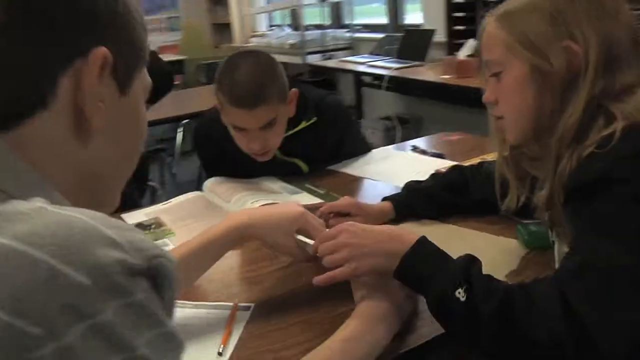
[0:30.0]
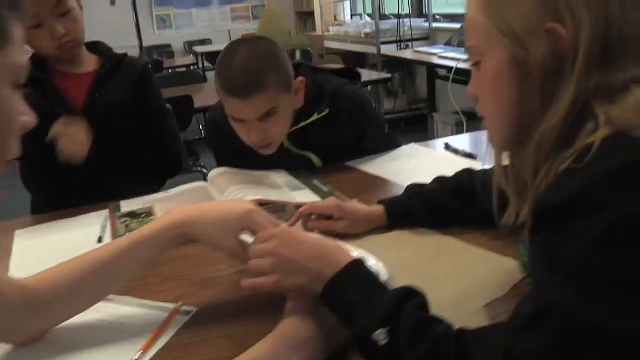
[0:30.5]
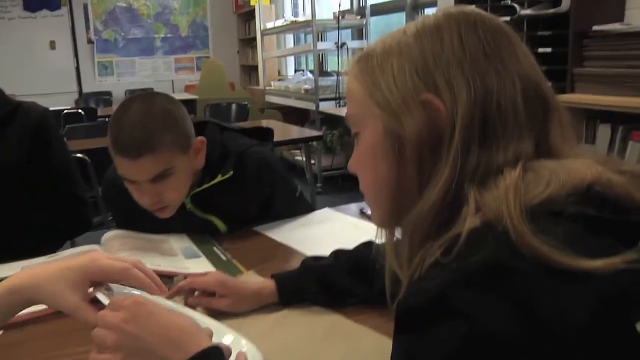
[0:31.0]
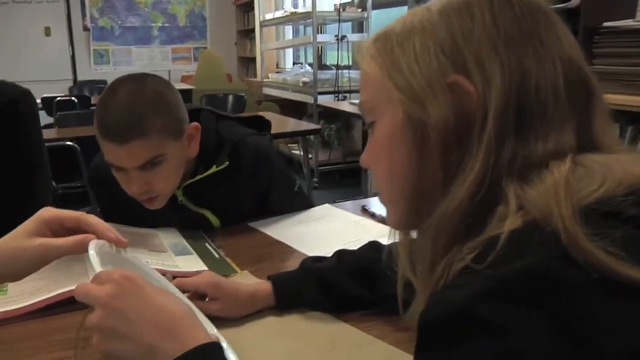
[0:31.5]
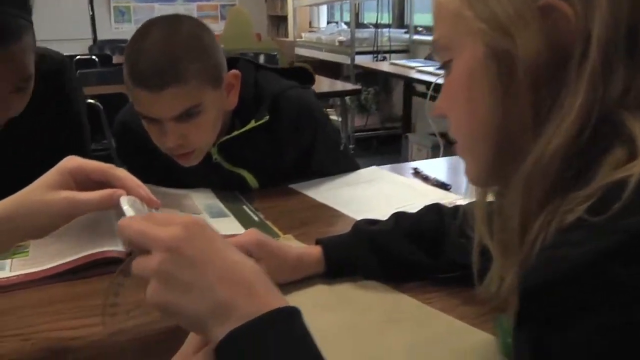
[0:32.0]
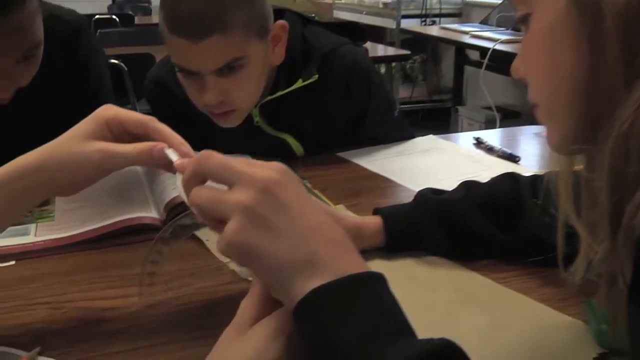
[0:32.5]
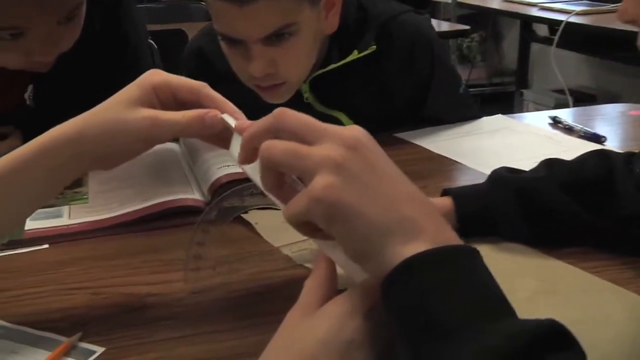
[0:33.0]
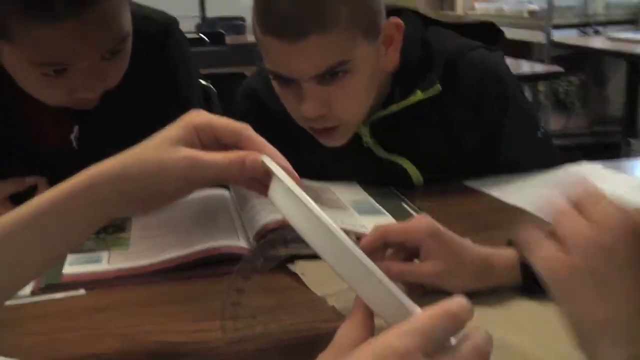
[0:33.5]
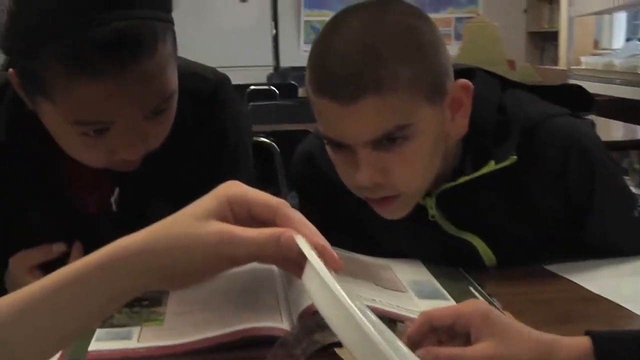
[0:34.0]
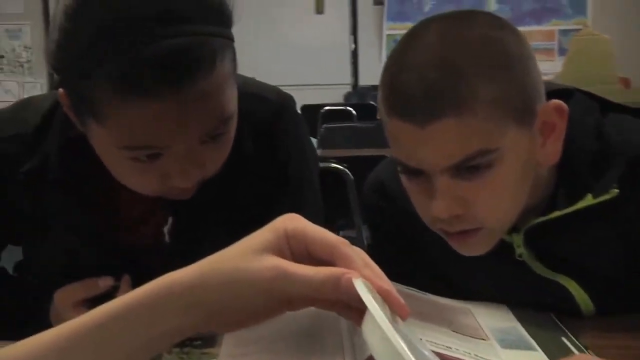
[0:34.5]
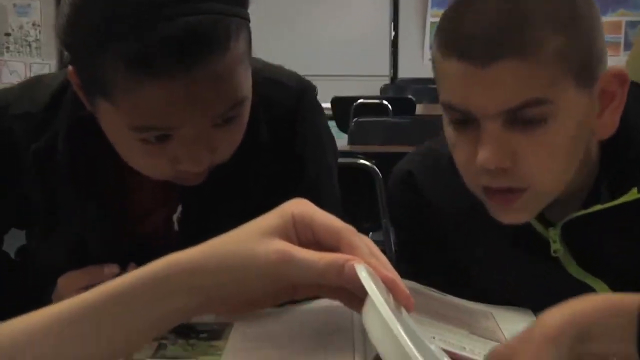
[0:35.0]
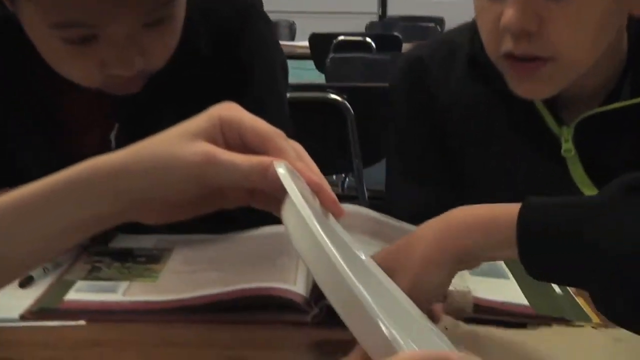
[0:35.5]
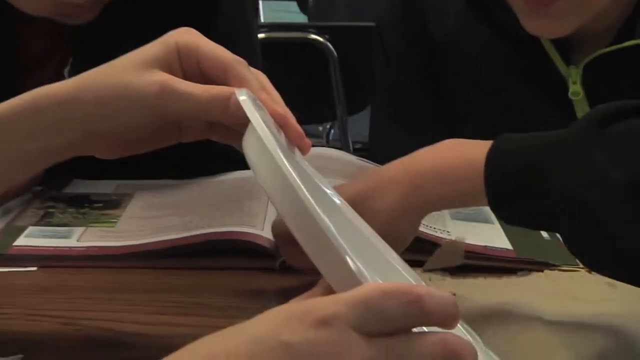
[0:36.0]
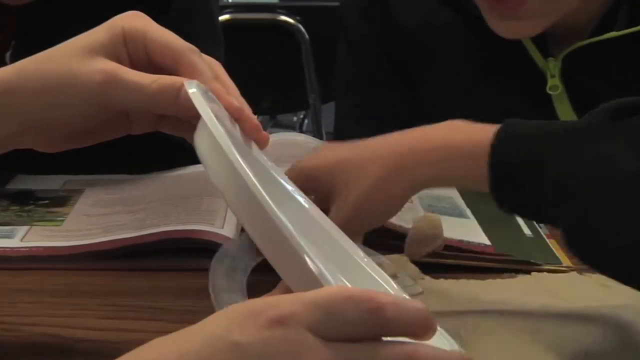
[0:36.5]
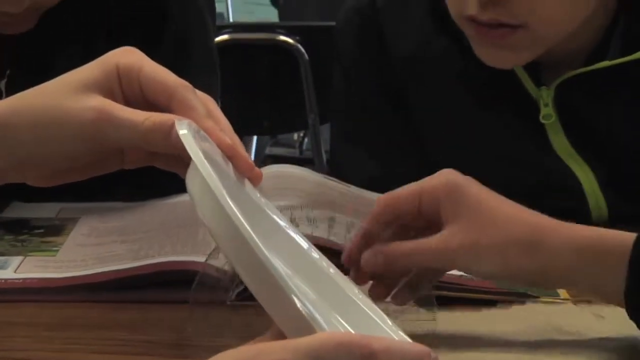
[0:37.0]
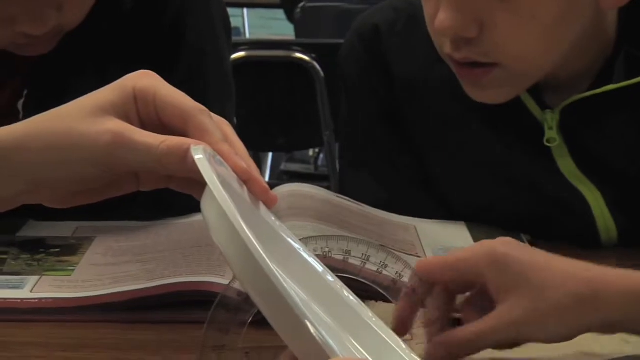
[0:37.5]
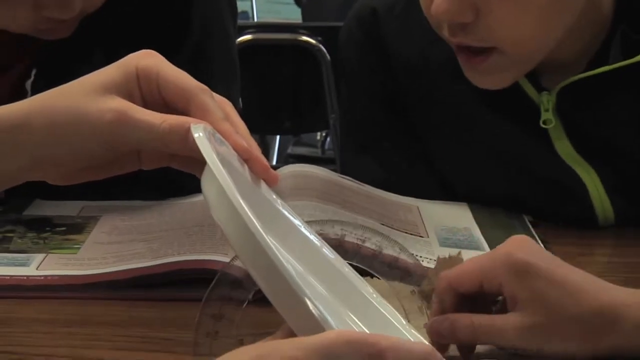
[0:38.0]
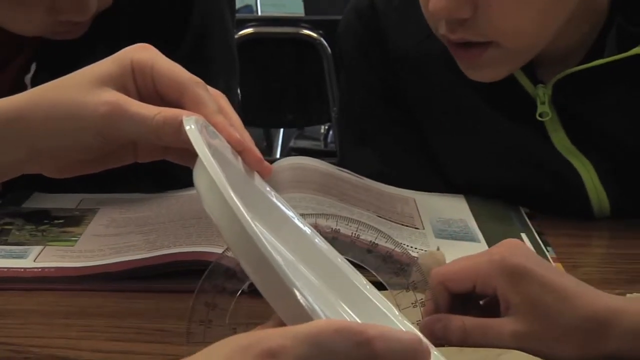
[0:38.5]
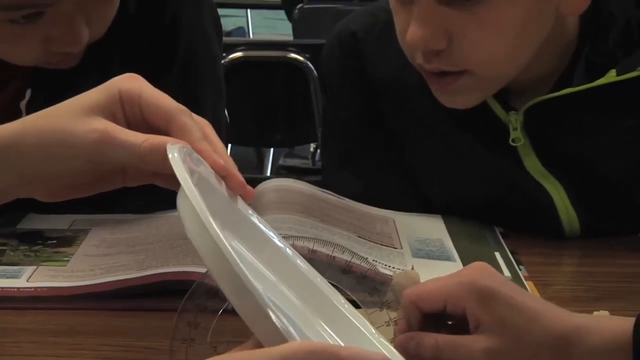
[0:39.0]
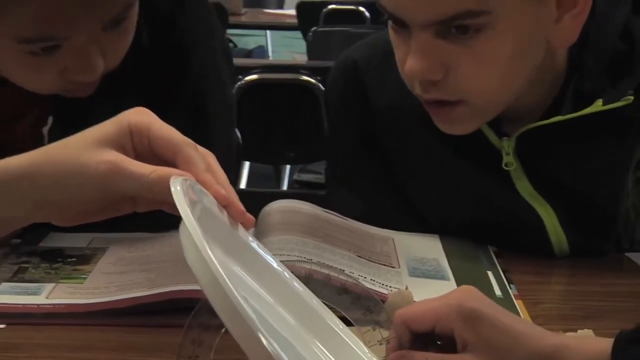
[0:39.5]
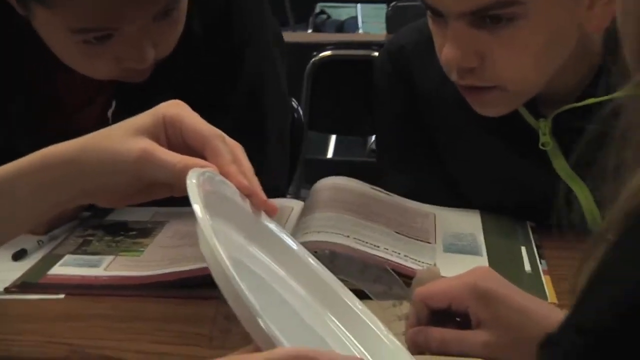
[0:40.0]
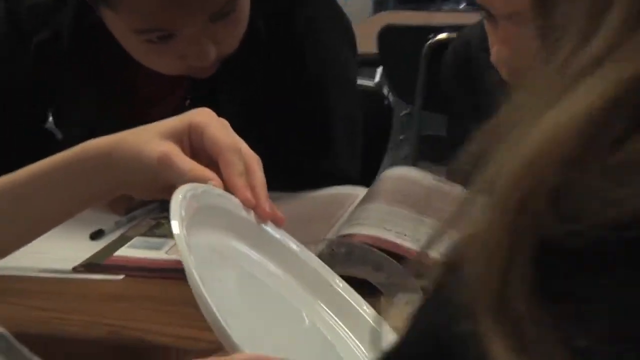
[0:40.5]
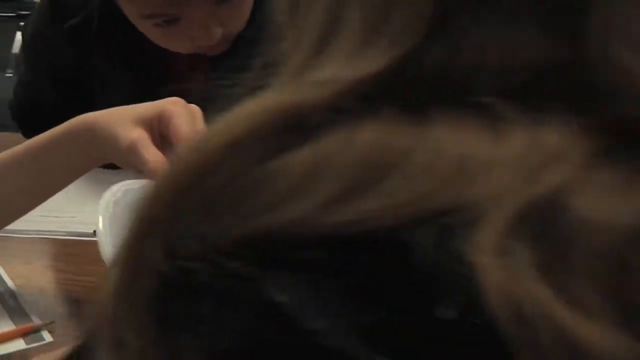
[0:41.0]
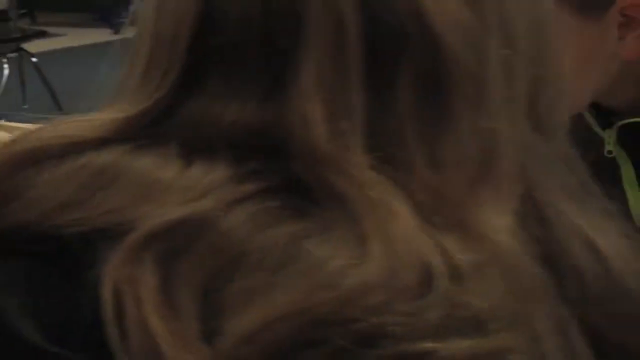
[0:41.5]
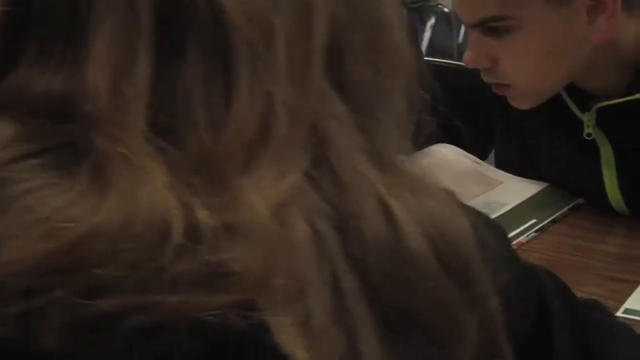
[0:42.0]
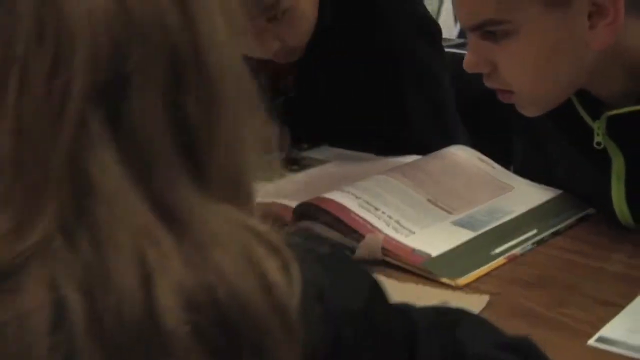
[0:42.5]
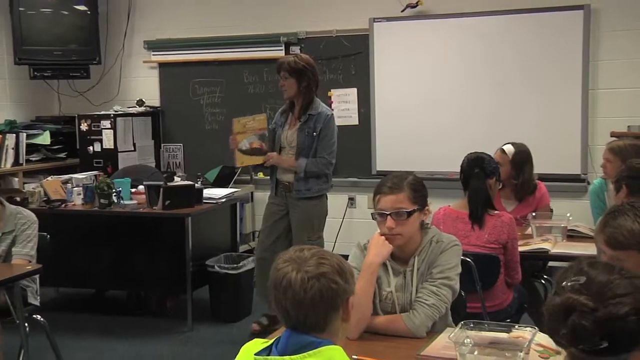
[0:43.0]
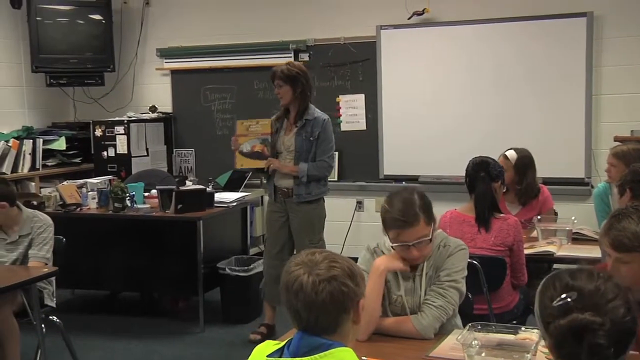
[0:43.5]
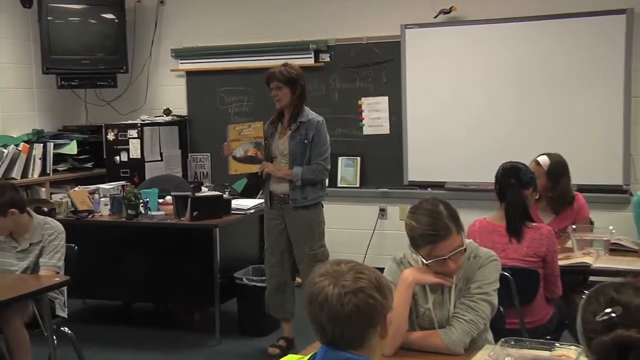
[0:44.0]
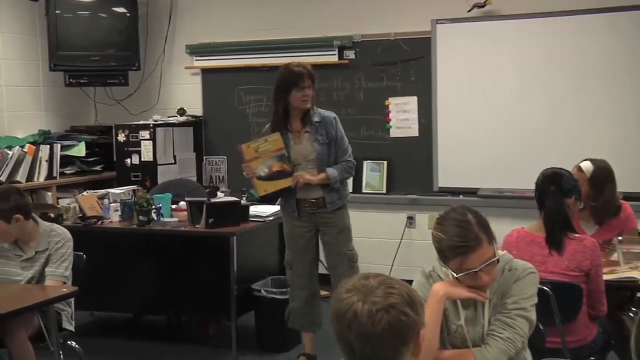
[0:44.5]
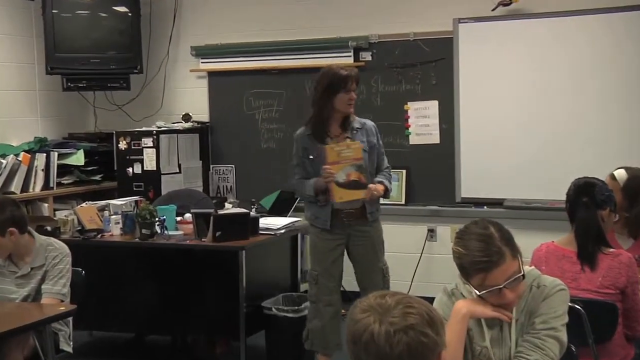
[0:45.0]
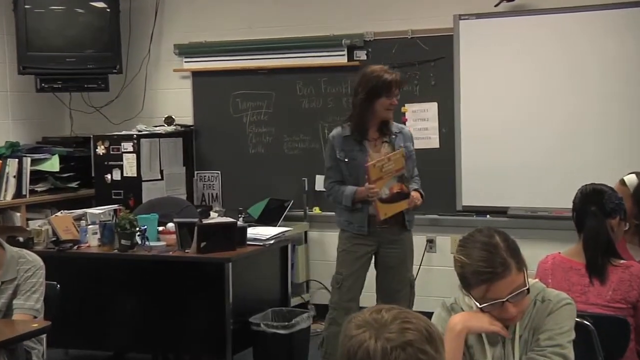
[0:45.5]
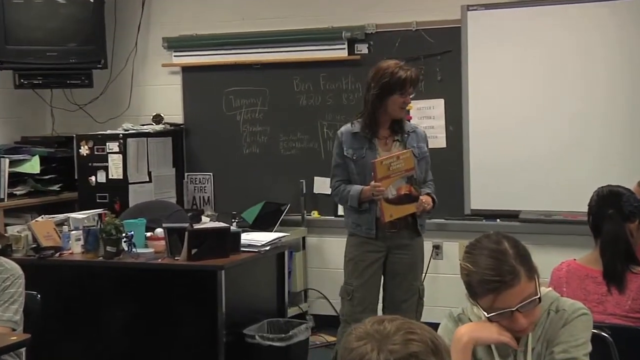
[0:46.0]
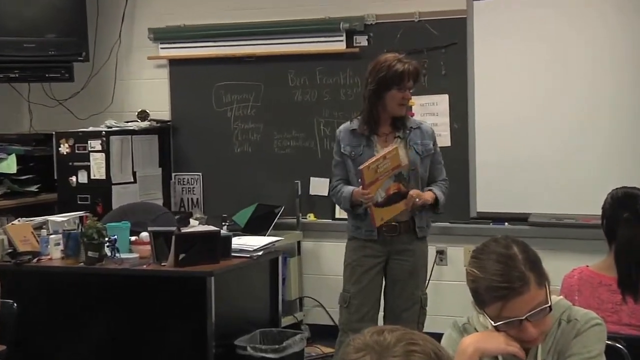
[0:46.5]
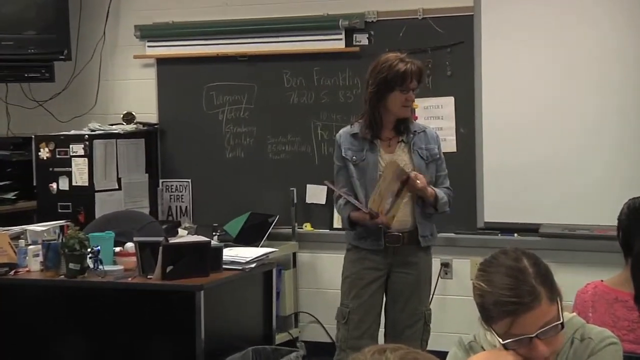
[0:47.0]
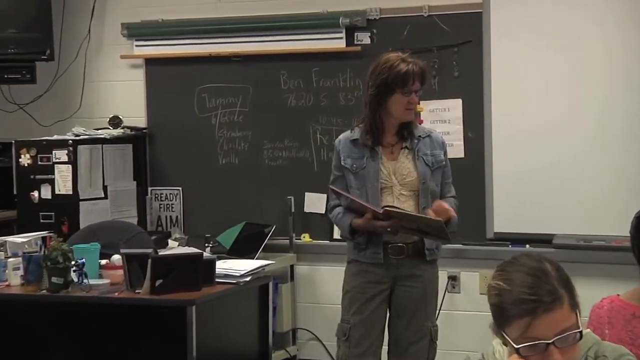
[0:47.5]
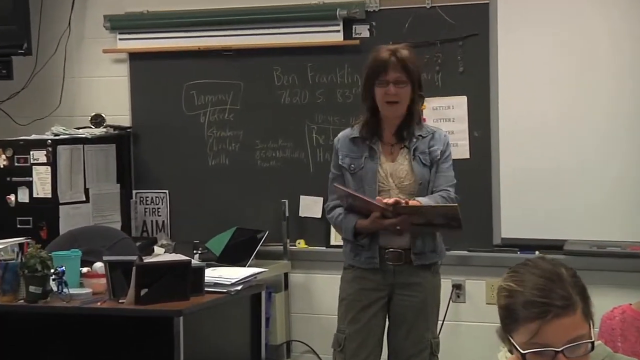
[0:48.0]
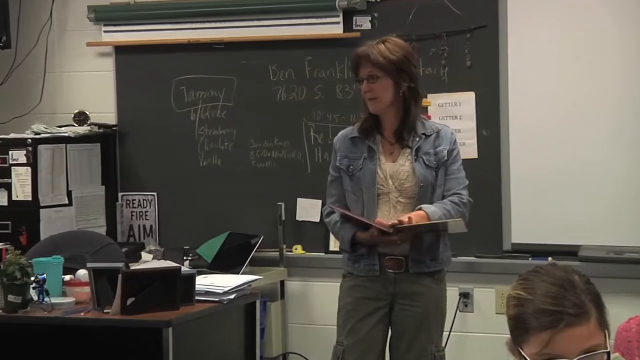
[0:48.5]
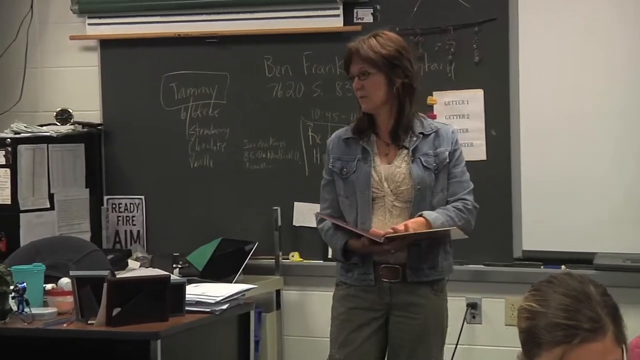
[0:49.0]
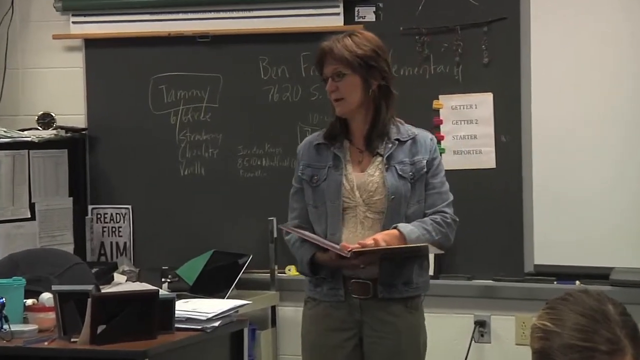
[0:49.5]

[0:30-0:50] The children take measurements using a protractor. There is a plate. The teacher holds a yellow guideline book, and there is a blackboard behind, as well as a whiteboard behind the teacher. The teacher guides the children, then opens the book and tells the children to open and read, and the children share and compare their answers.